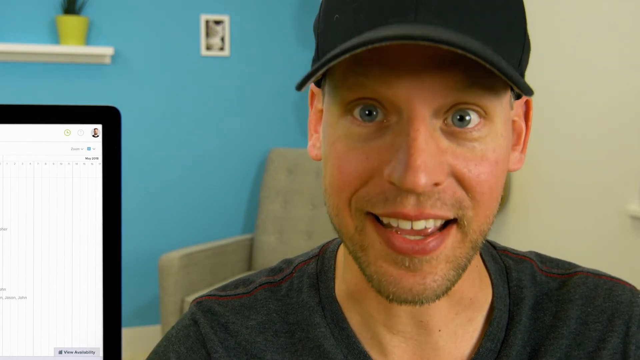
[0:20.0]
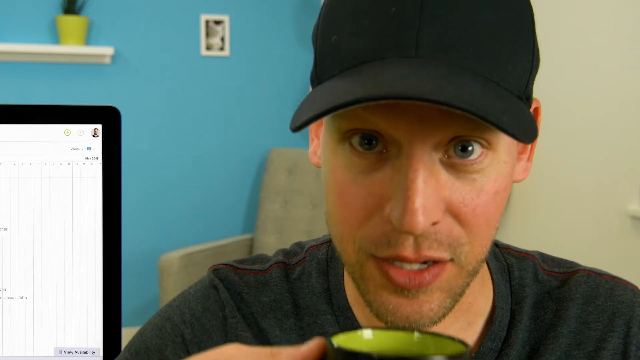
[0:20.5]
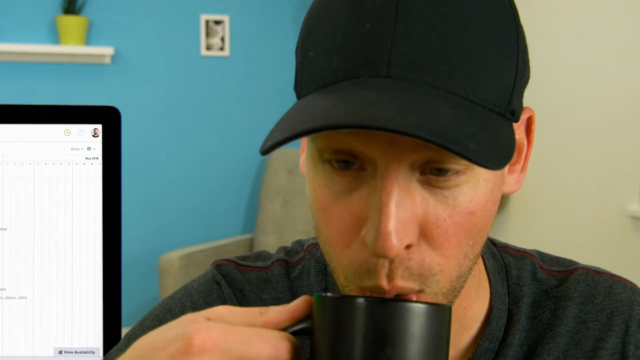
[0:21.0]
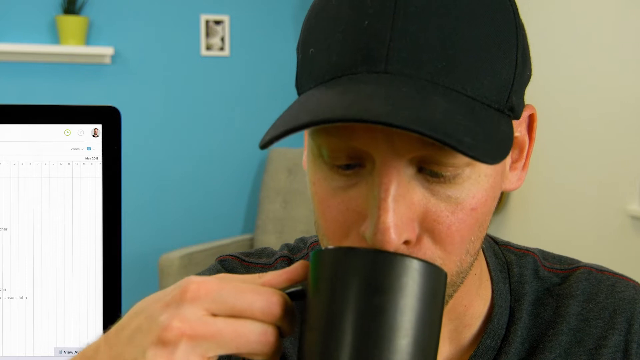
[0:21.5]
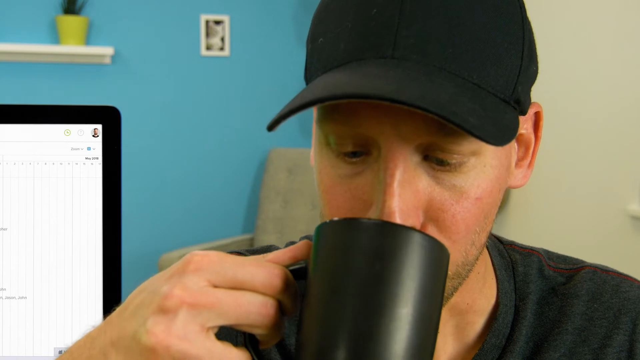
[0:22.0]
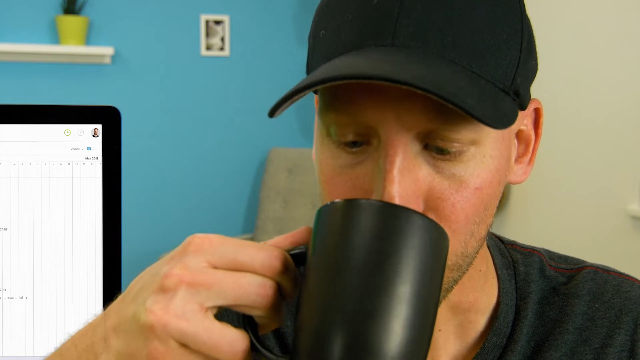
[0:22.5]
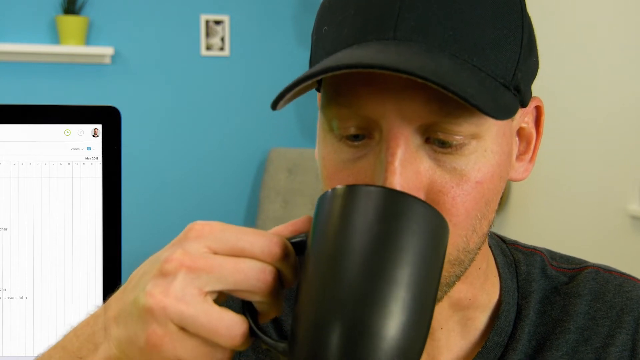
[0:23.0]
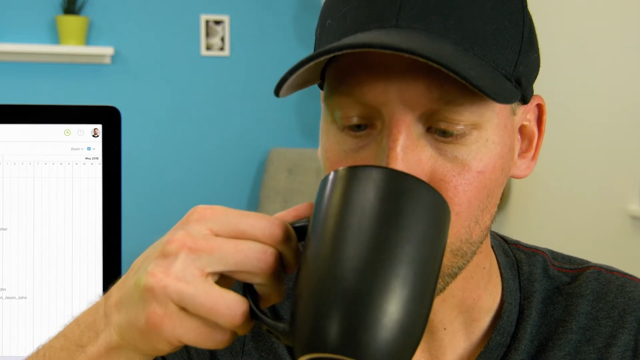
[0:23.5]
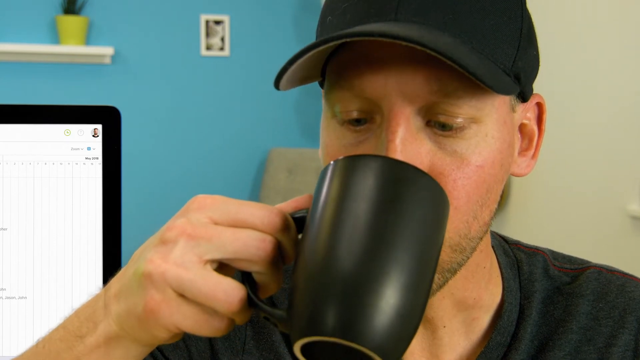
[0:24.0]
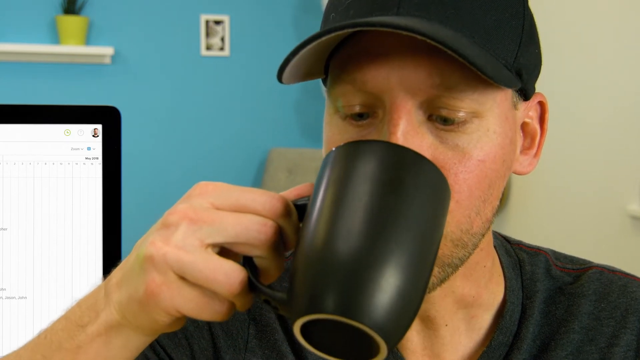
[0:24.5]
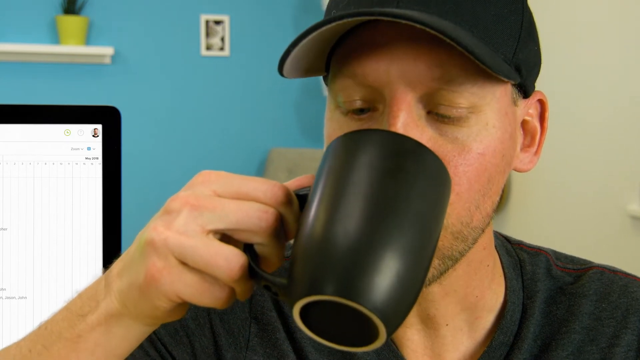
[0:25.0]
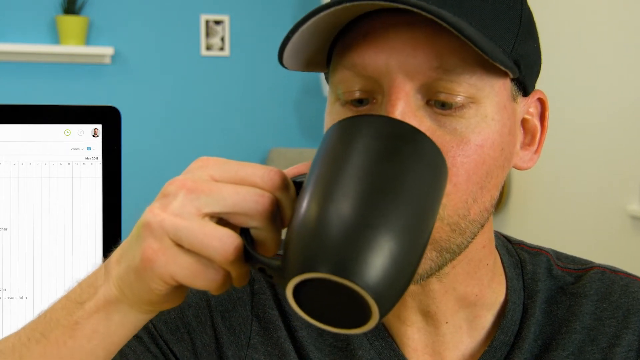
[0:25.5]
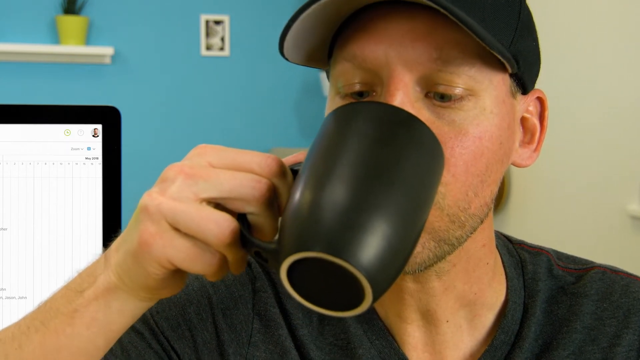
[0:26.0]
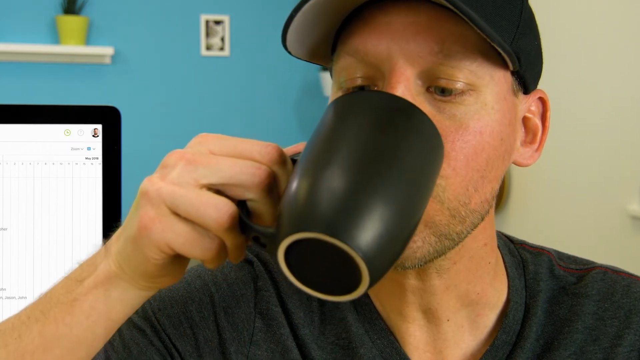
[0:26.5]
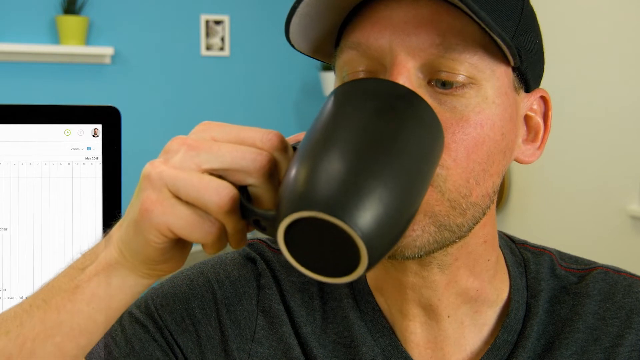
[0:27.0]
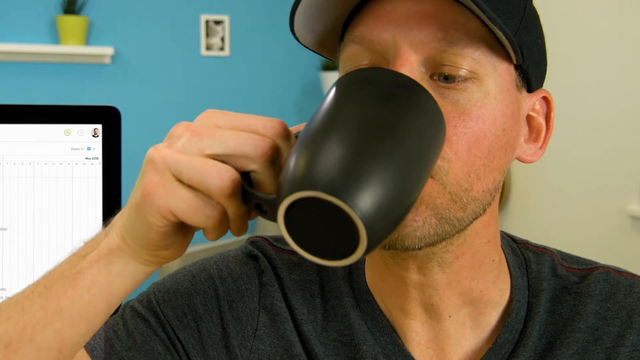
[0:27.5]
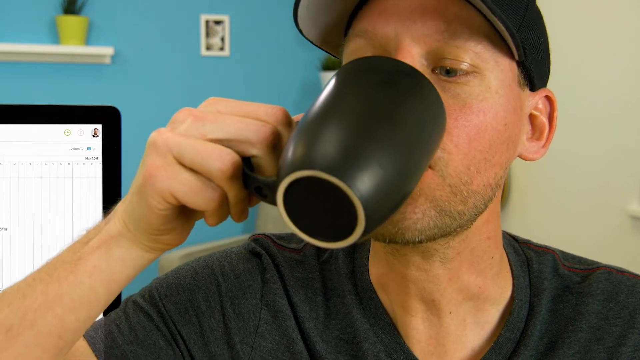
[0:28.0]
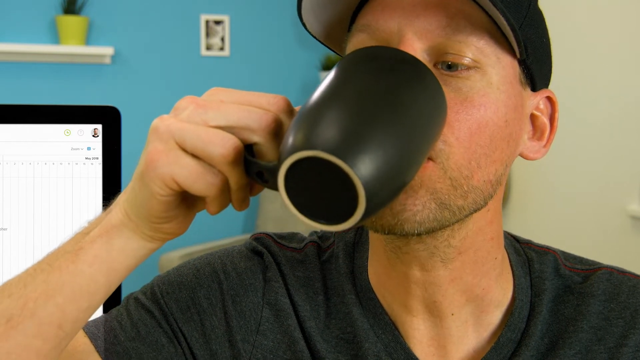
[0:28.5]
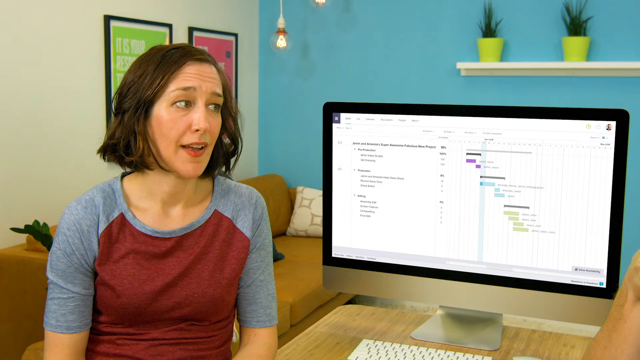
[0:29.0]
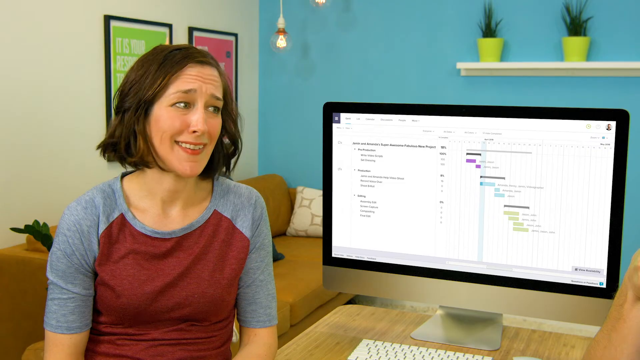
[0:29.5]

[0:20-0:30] A man in a black hat, with blue eyes and a gray t-shirt, is shown with a chair behind him, a blue wall, a picture frame of a cat on a wall, a white shelf with a plant, and a computer to his left. He begins to take a sip from a coffee cup and takes a very large sip, as if chugging the whole thing. The shot then transitions to the woman, who looks at him, shaking her head as if in disapproval and smiling.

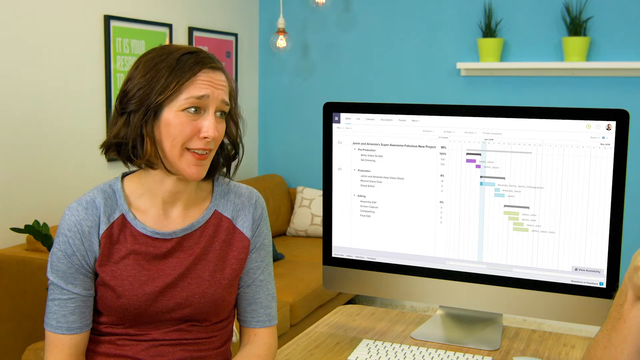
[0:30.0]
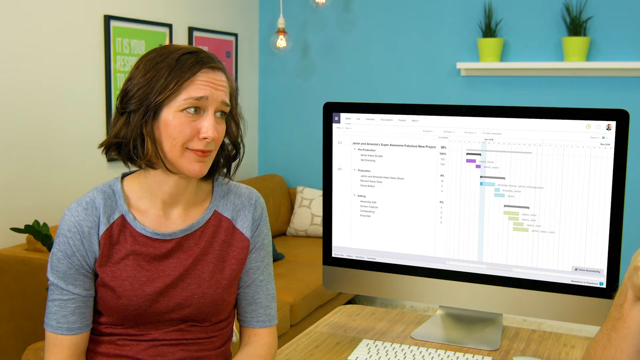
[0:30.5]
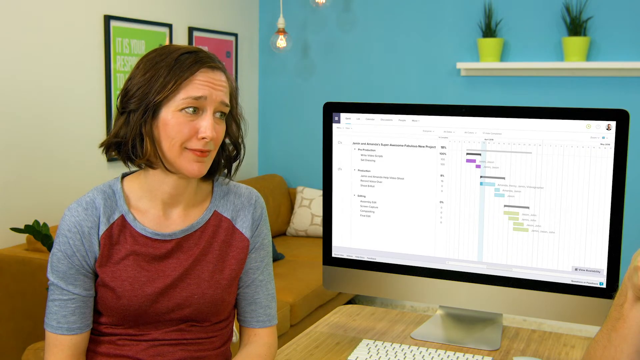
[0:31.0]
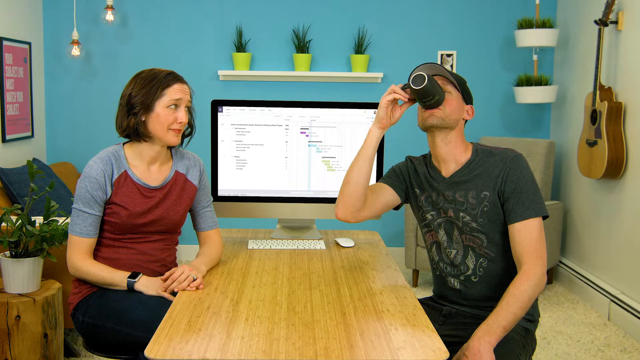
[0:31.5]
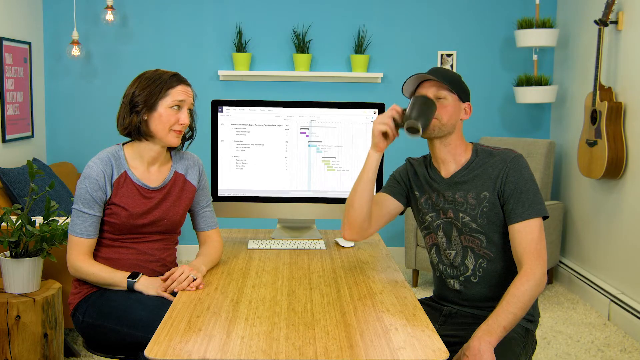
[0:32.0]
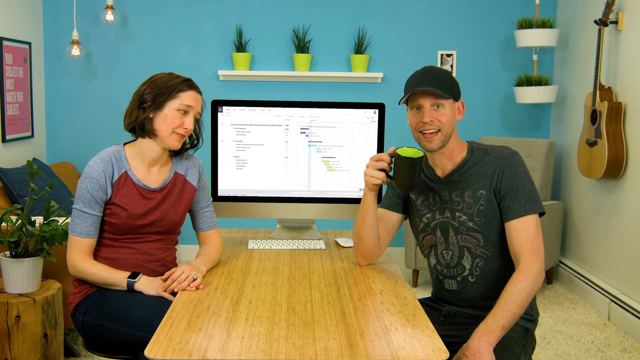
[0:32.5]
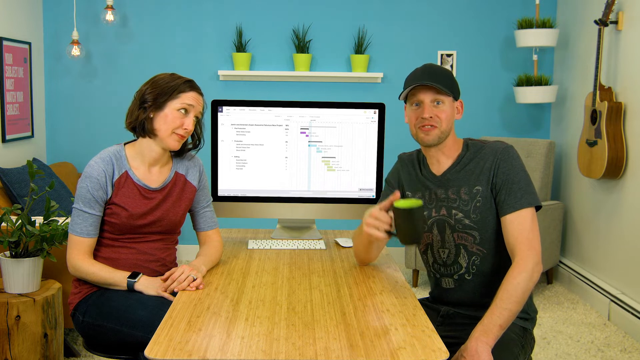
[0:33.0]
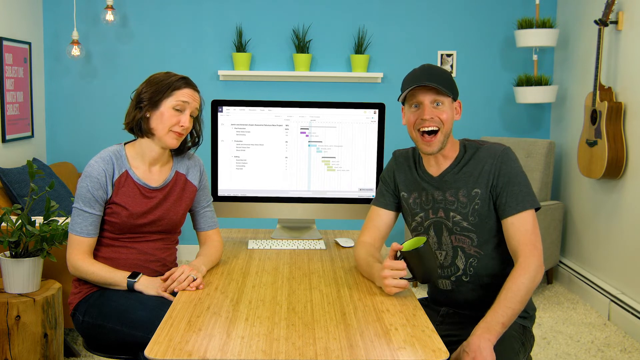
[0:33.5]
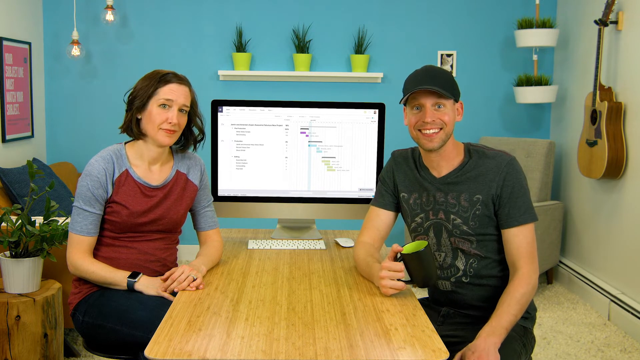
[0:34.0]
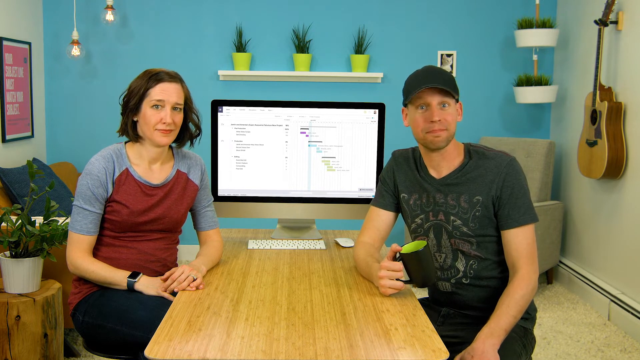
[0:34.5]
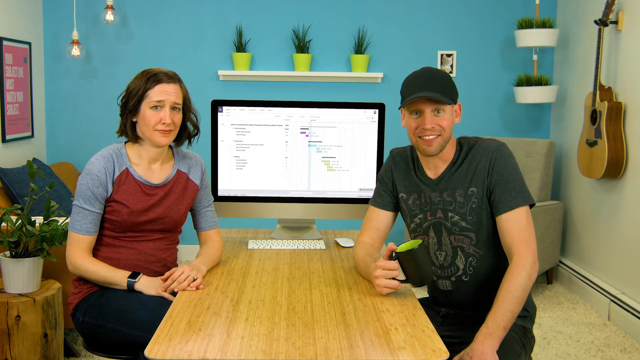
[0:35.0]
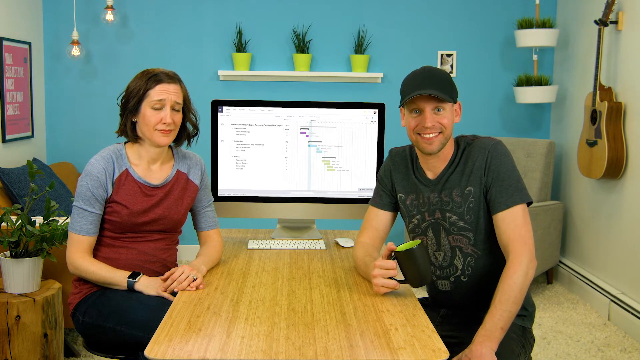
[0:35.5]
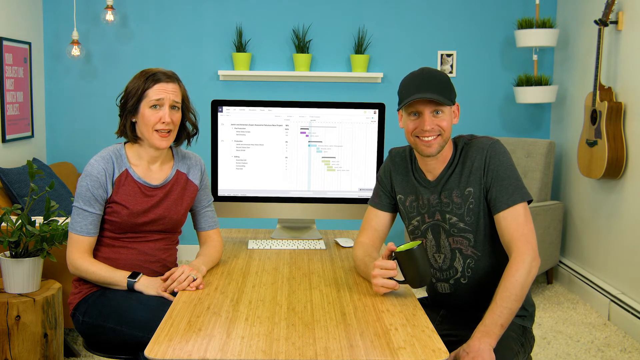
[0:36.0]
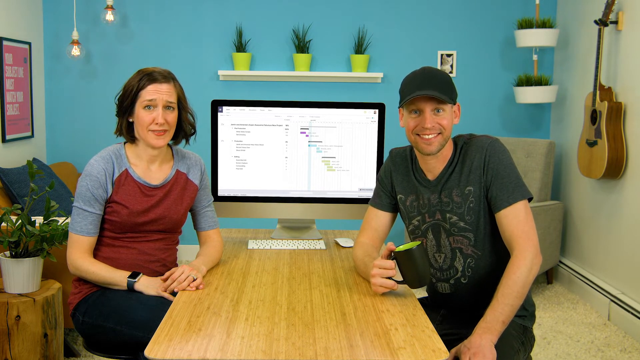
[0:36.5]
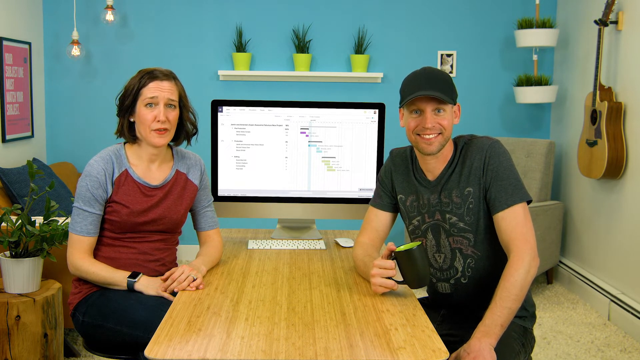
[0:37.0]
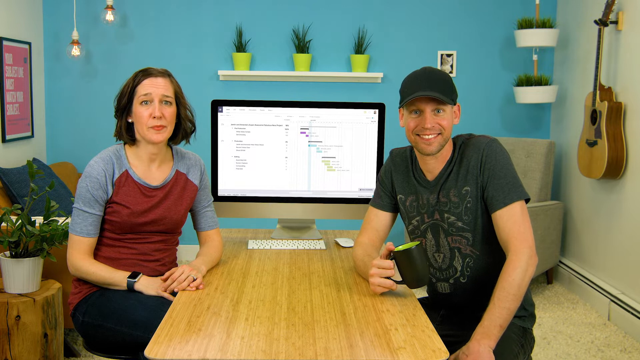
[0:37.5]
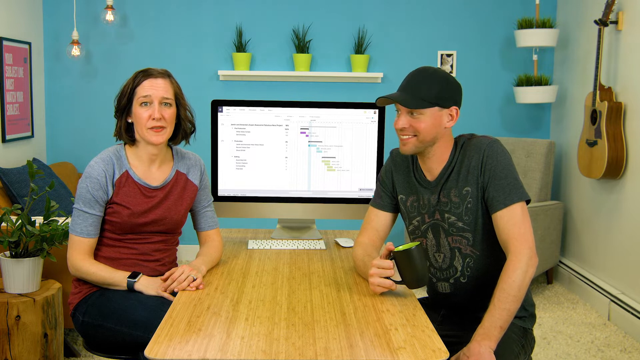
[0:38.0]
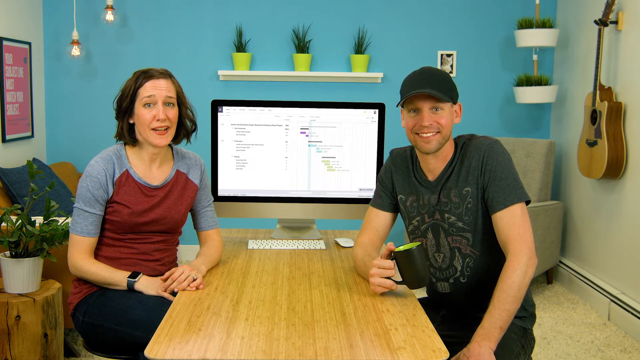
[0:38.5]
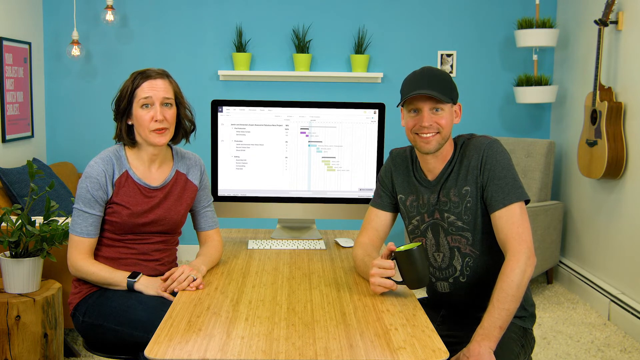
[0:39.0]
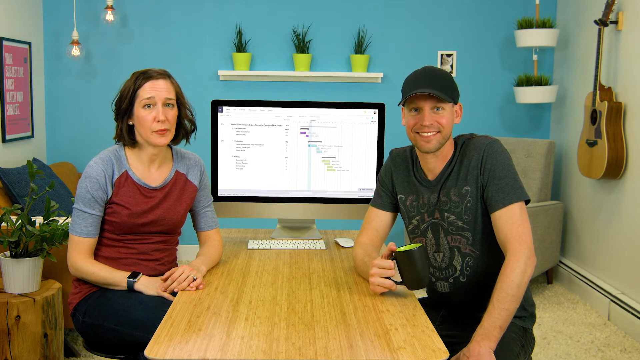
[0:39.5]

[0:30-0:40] A woman with short brown hair wears a gray and red t-shirt. Behind her is a couch with some plants and pillows, along with framed pictures on the wall, a computer on her right side, a blue wall behind the computer, and a white shelf with some plants on it. She looks straight at the man on the other side of her as he drinks from a black cup. The cup goes empty, and he smiles at the camera, sort of puts his cup down, appears to yell something, and then has a big smile on his face. He keeps talking, slightly shrugging his shoulders while shaking his arm, almost like he has nervous jitters. The woman then talks while he continues to smile and looks at the camera.